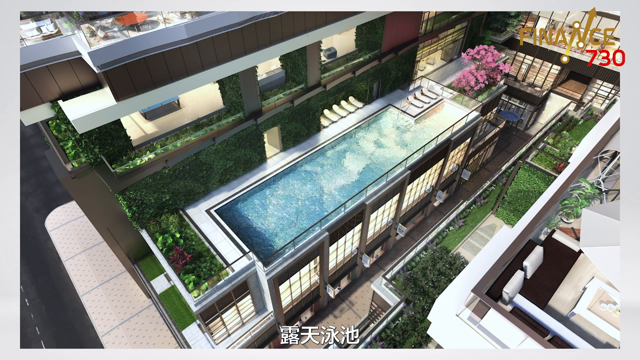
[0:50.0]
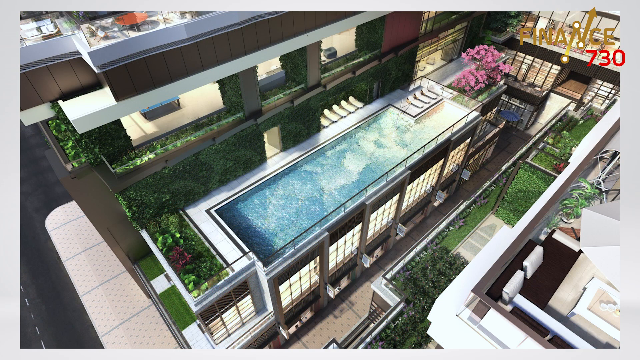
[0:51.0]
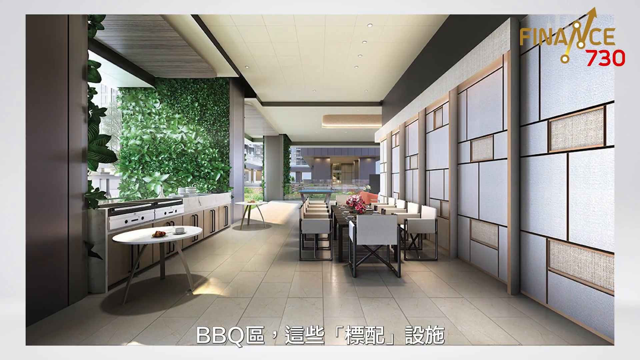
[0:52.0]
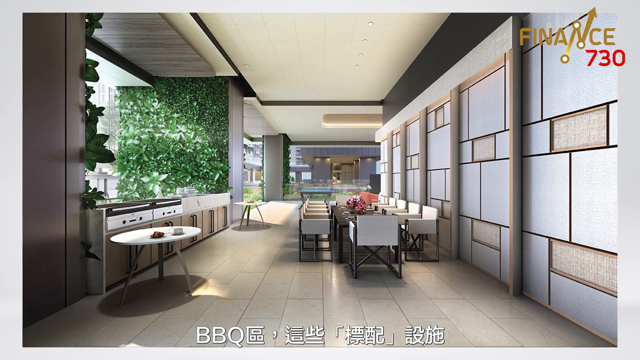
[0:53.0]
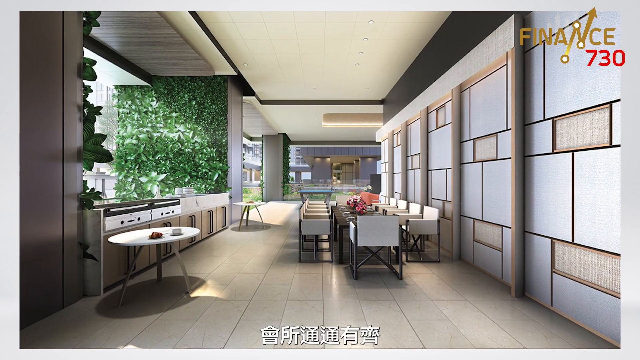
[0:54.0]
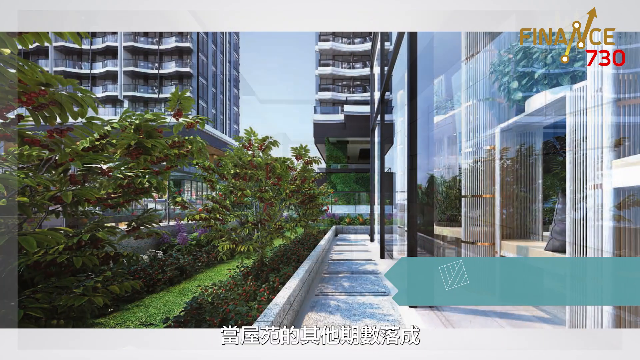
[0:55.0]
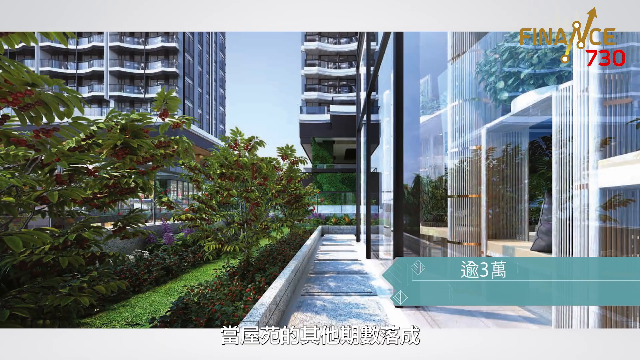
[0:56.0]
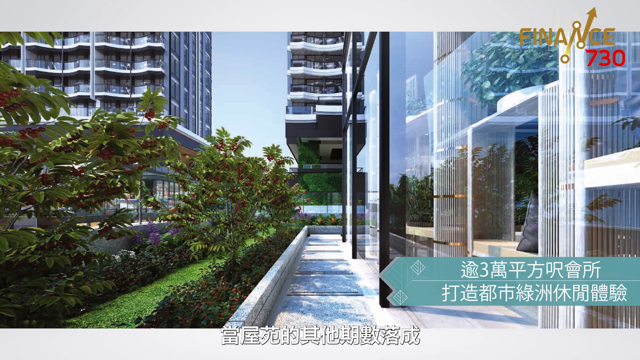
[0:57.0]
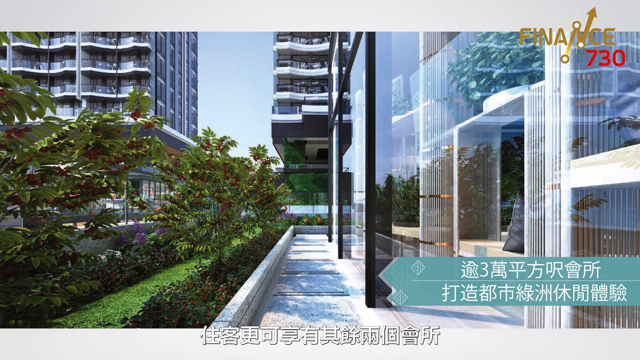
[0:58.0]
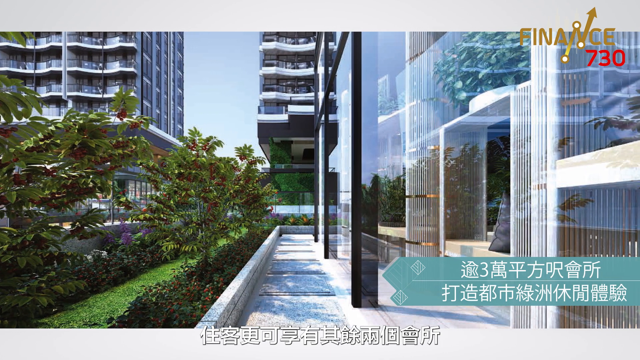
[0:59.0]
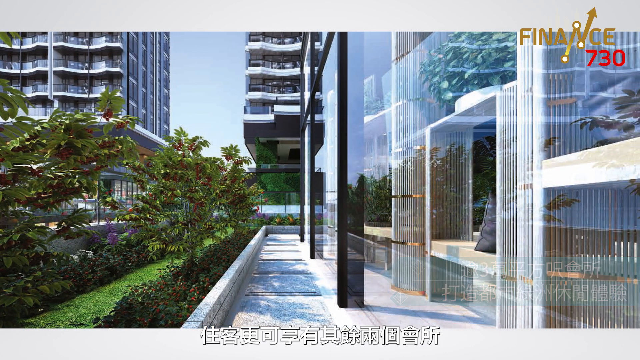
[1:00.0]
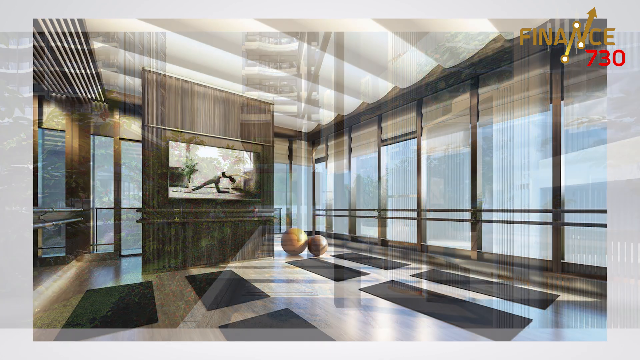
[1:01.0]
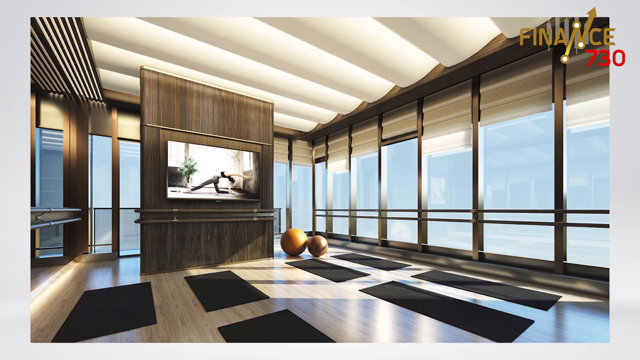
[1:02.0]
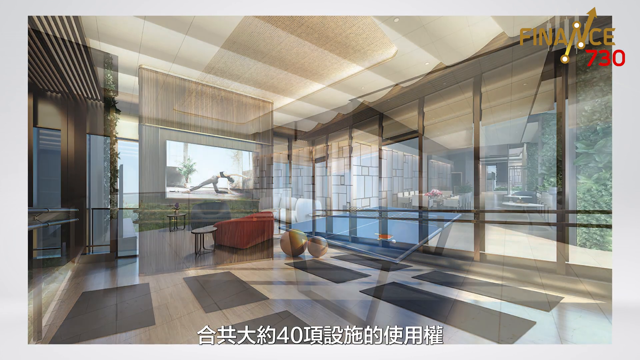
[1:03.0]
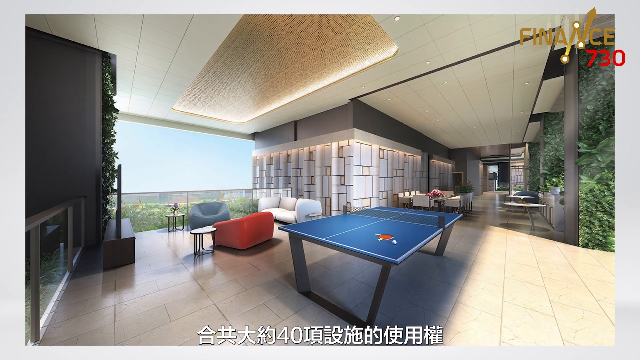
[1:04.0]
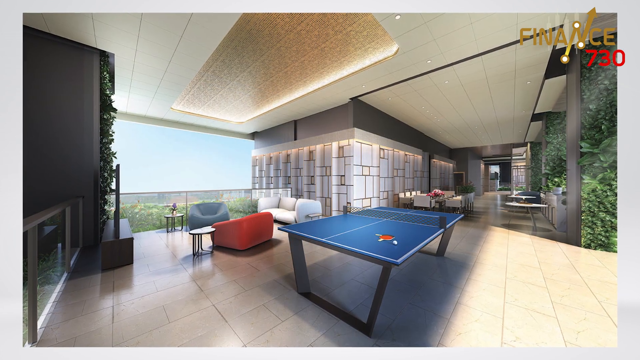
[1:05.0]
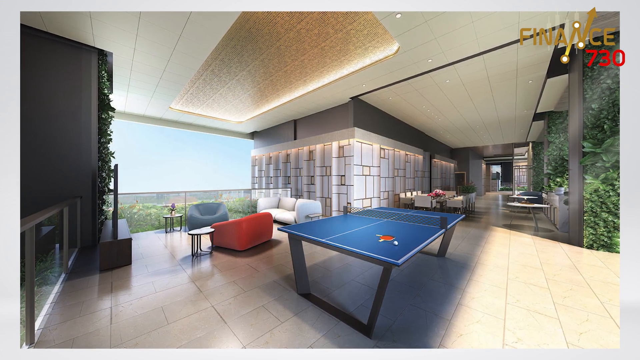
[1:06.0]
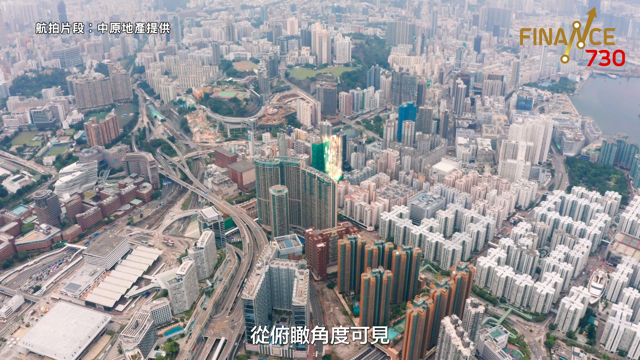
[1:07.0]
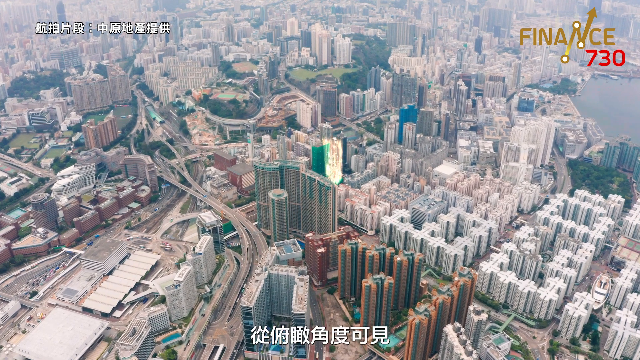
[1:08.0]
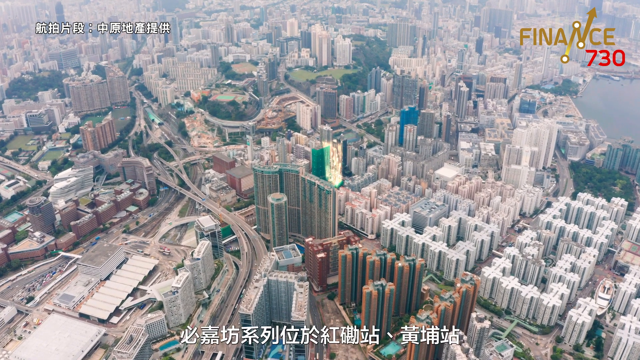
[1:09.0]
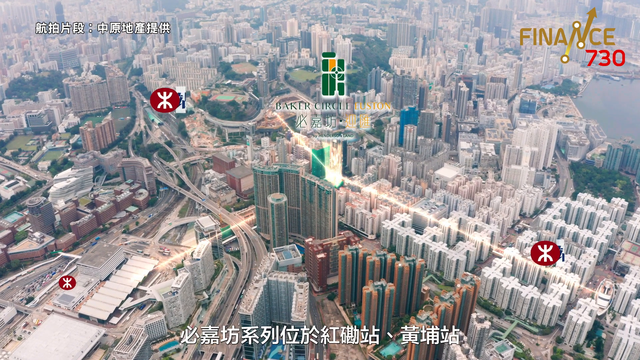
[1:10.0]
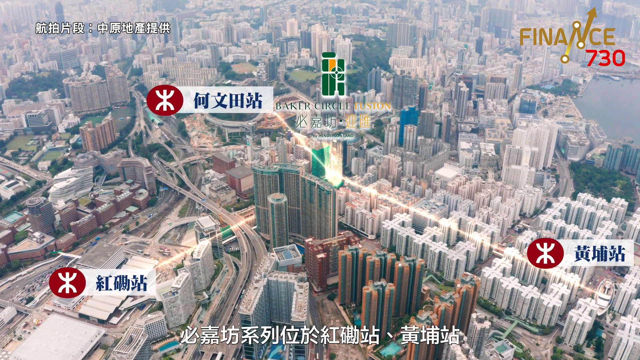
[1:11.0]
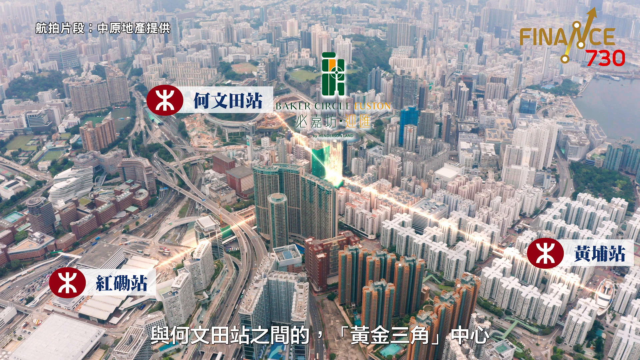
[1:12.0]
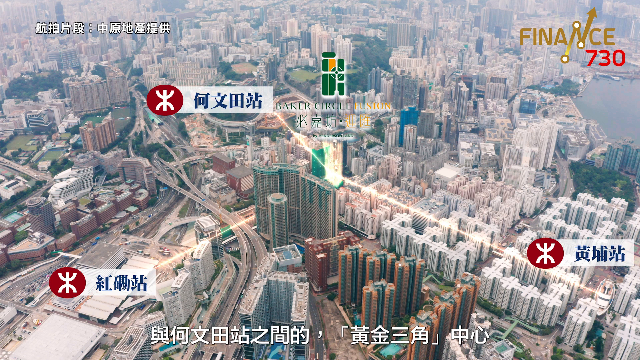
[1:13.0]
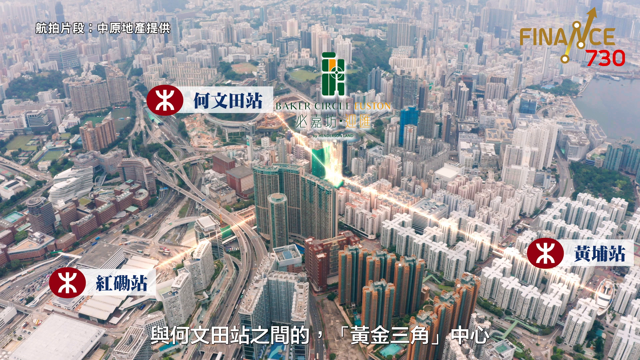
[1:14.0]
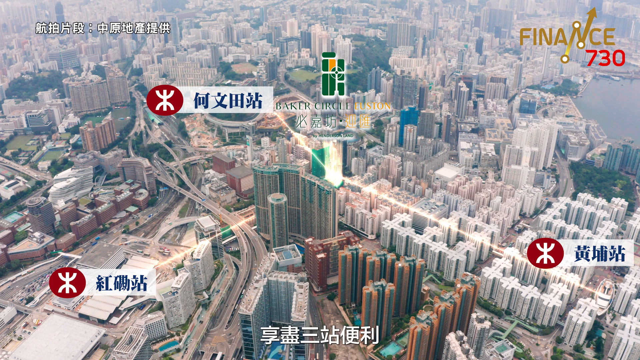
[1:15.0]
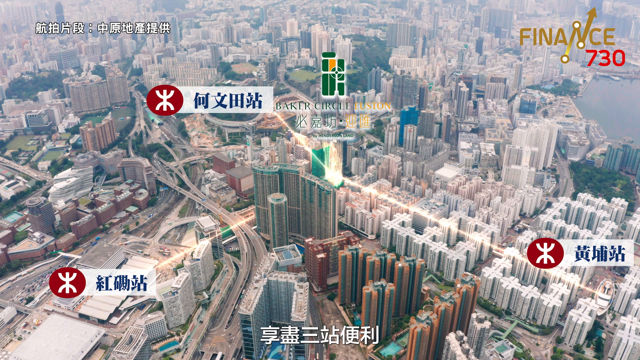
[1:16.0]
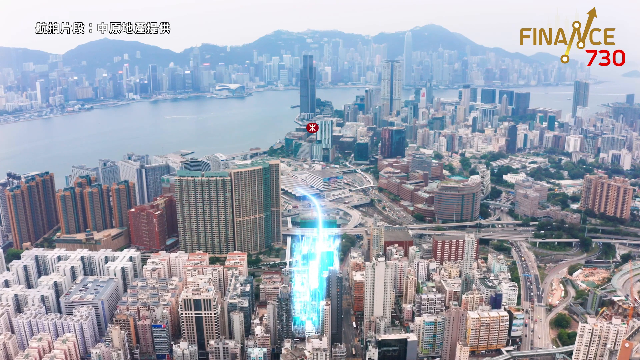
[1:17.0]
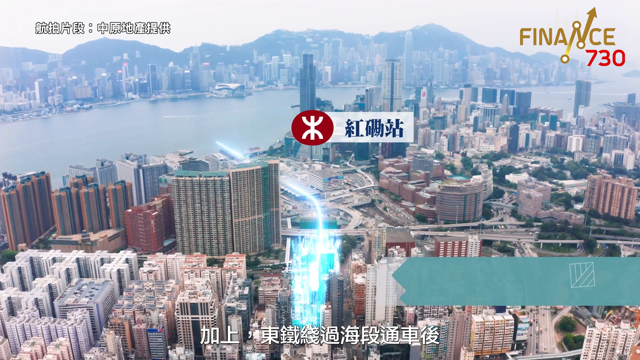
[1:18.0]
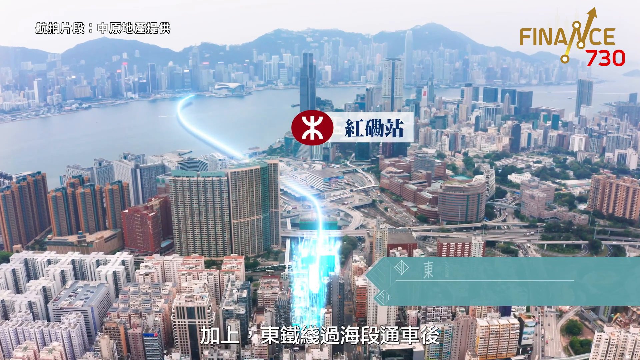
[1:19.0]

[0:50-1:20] An overhead view shows kind of a courtyard with a lot of plants, and greenery growing up the sides of some parts of the building. A pool and some pool chairs are shown from above. The view then moves inside to a big open area that appears to have a long table, possibly for conferences, along with a couple of other tables, and it appears there might be an area for cooking. Next comes an outside view of the building, with a walkway around it, hedges and trees, and other buildings around it. A pop-up with Asian writing that cannot be read appears on the right side. Then another interior view shows a room that appears to be an exercise room, with mats like yoga mats on the floor, a couple of balls, and huge windows giving a view of the sky; the room looks to be high up.